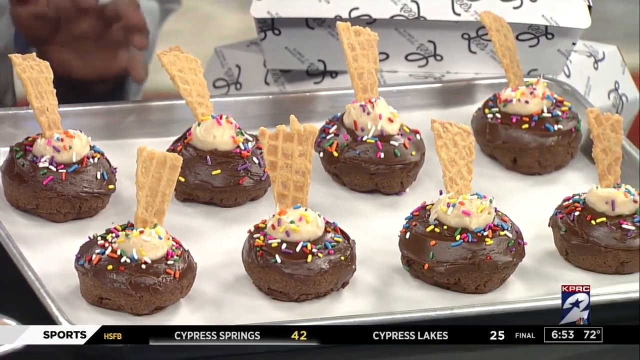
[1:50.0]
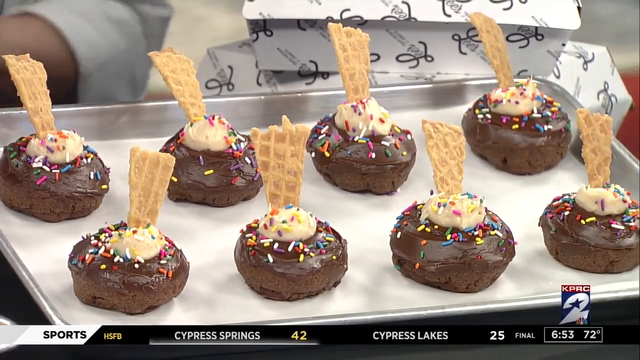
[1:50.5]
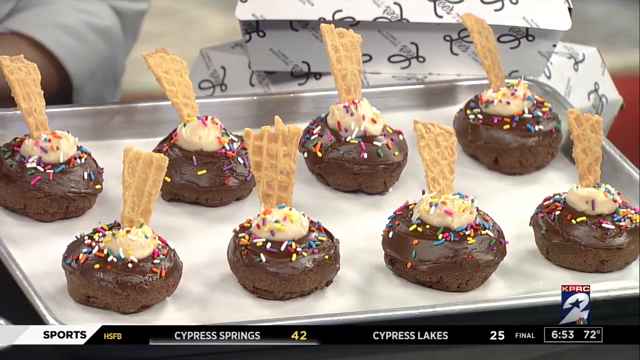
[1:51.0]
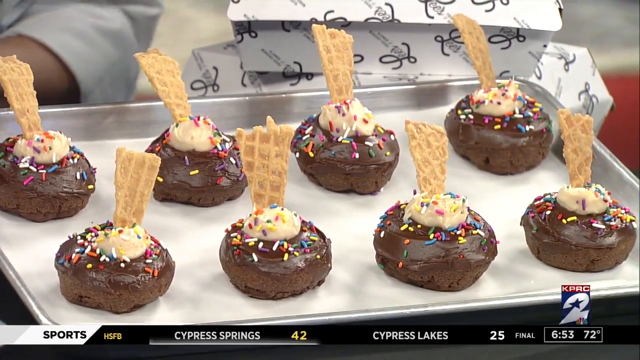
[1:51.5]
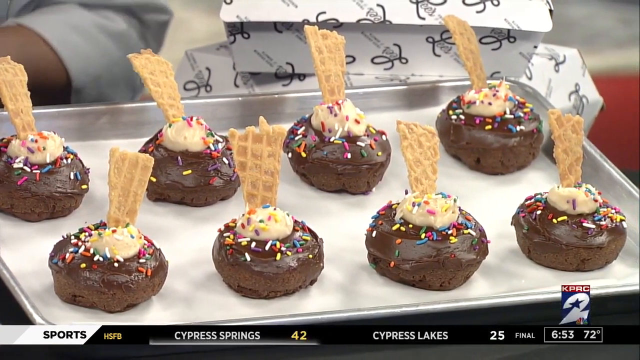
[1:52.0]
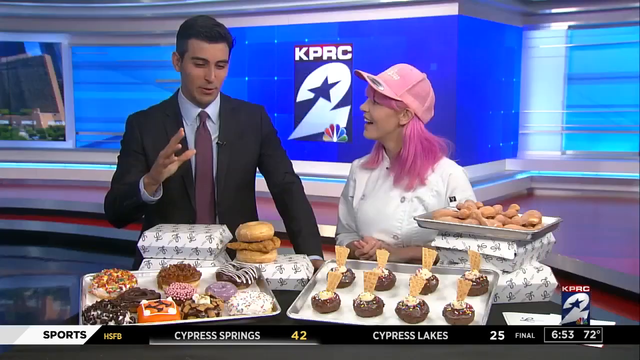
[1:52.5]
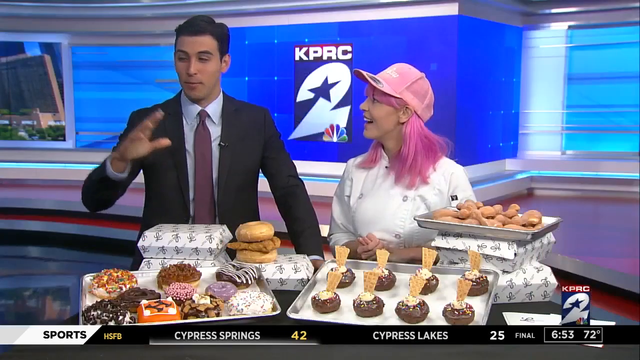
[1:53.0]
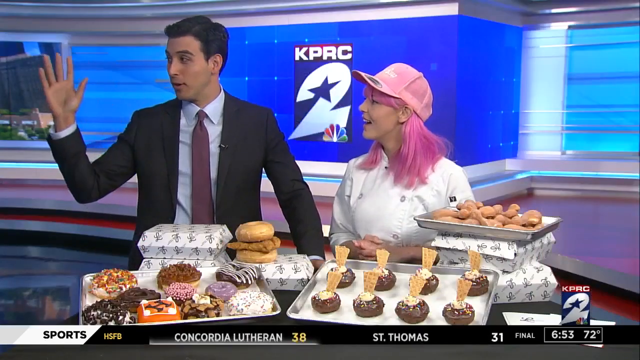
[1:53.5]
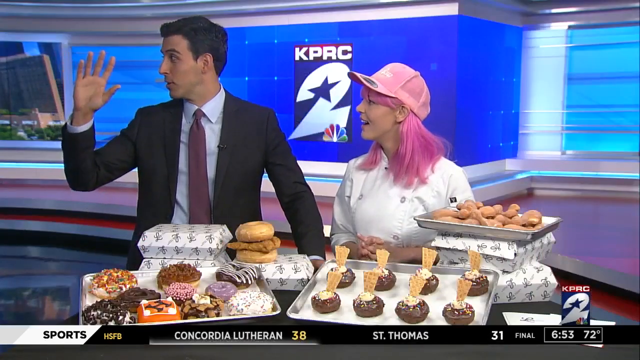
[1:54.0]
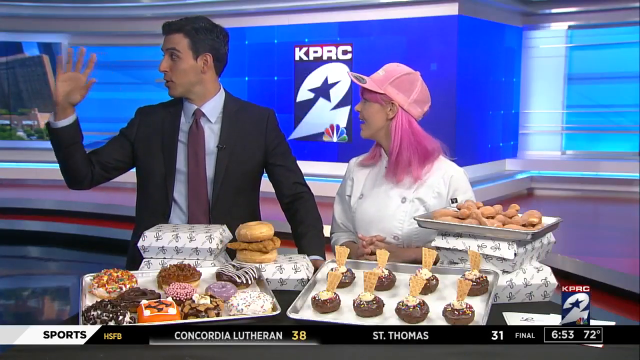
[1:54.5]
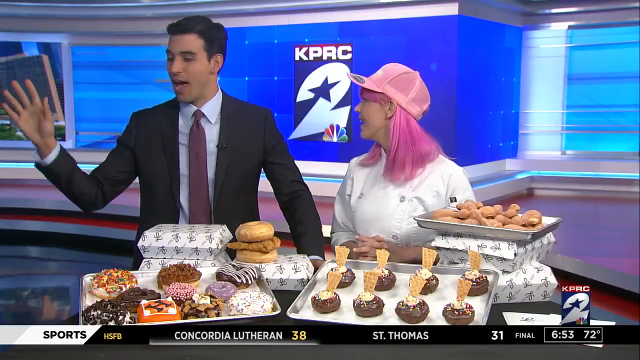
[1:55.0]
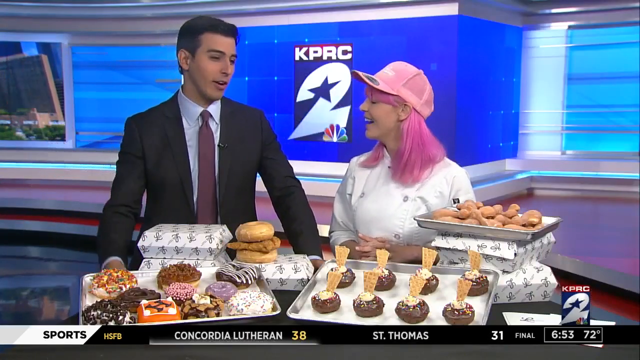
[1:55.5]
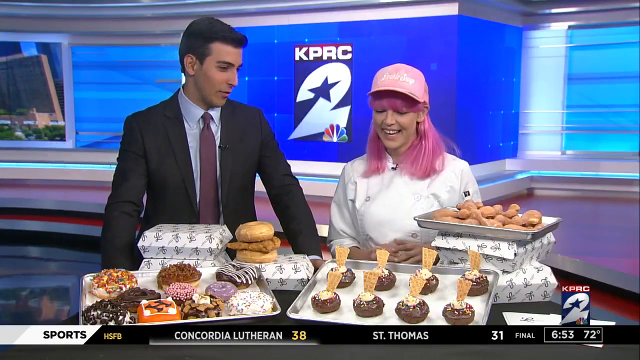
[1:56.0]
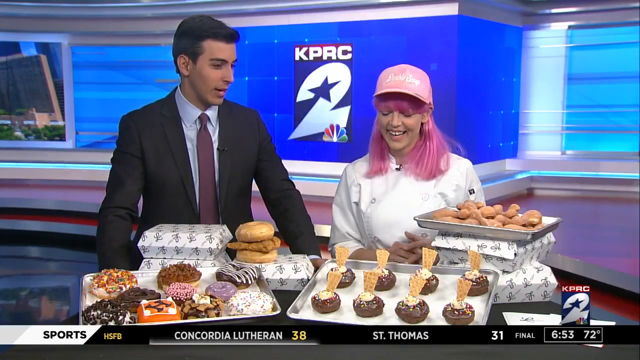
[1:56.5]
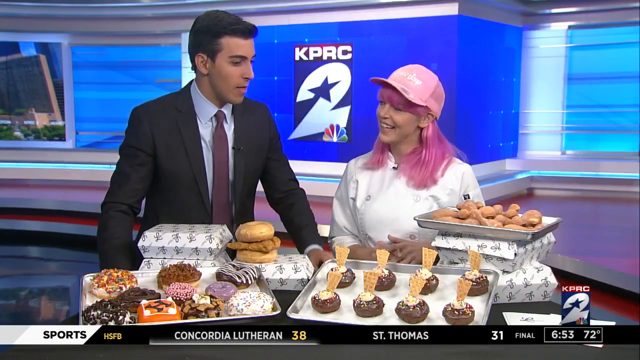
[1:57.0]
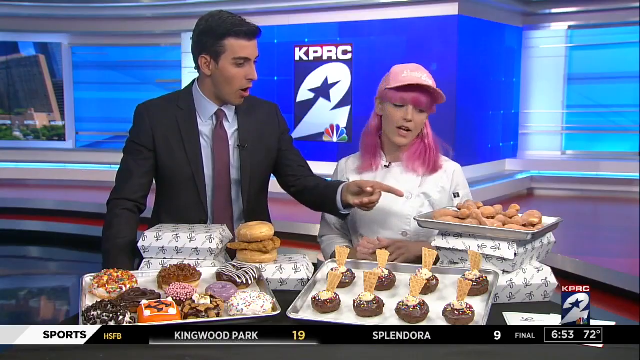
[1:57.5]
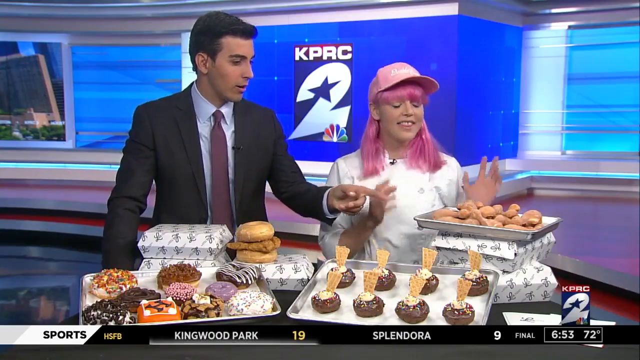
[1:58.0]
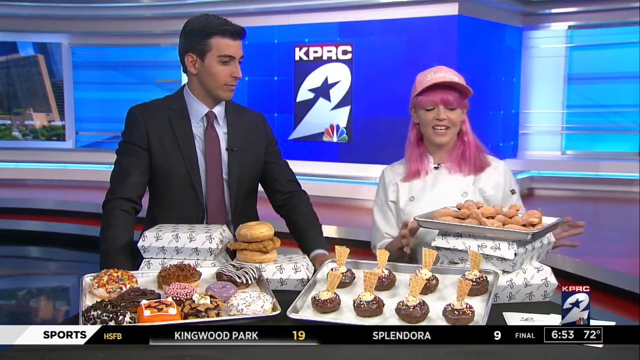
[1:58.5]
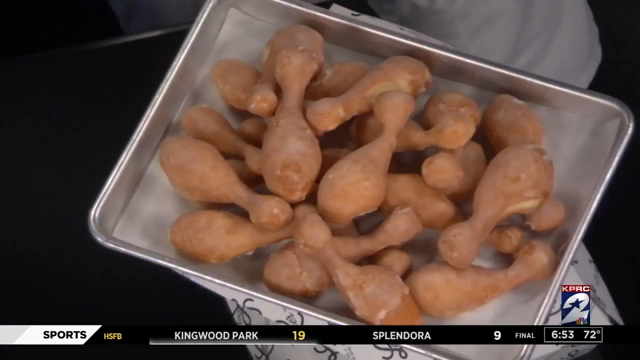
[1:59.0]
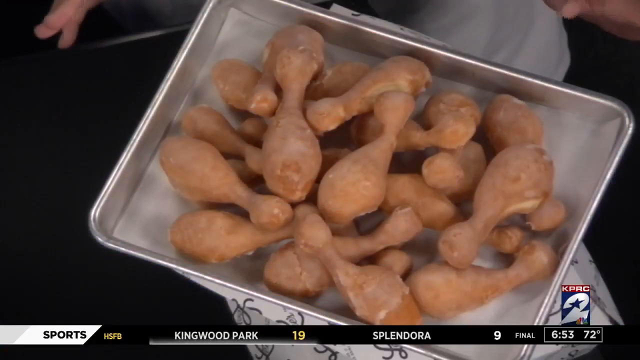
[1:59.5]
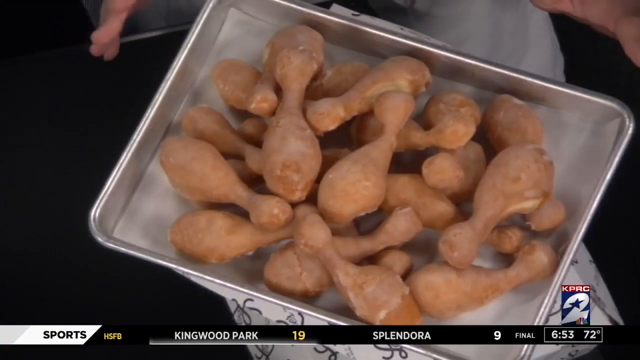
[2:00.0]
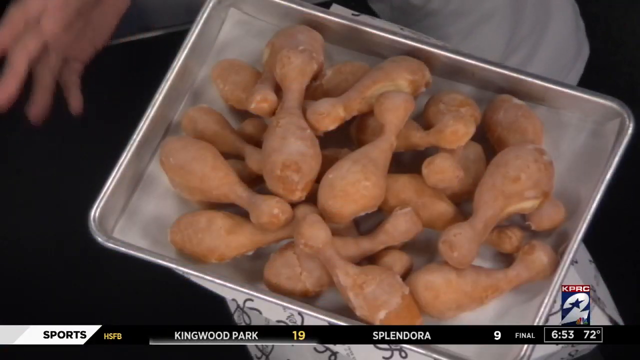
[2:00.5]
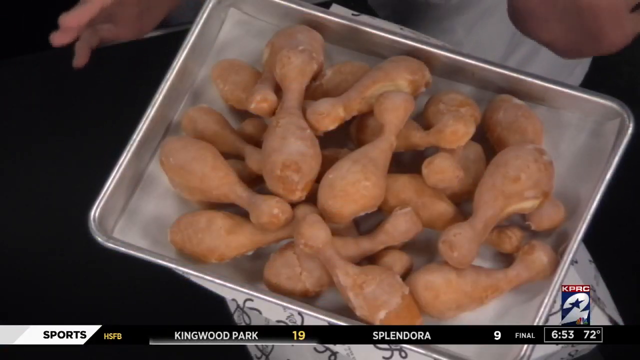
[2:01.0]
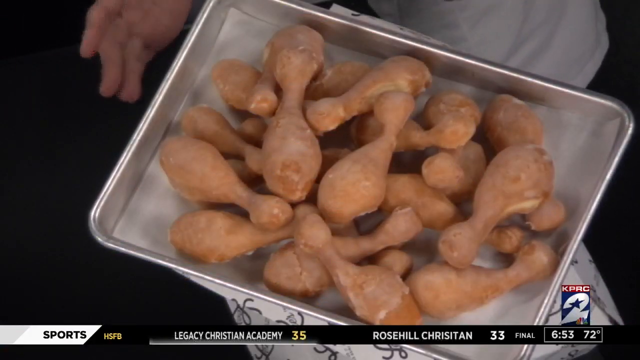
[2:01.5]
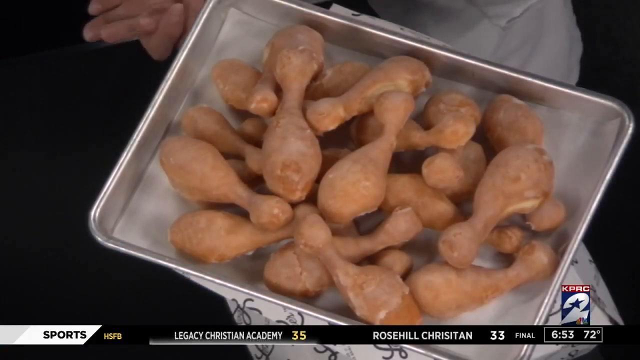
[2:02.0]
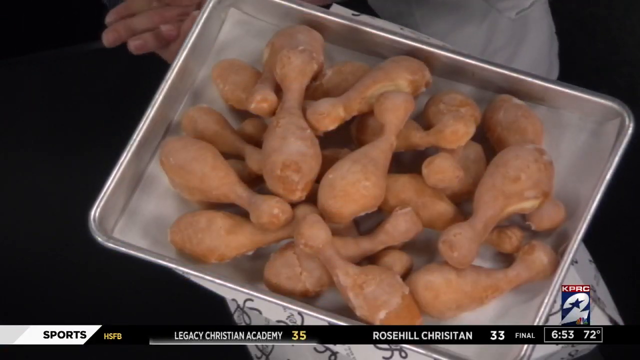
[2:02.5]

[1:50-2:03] Cupcakes made by a woman are shown on the KPRC show. Next, a tray of many donuts made in the shape of chicken drumsticks is shown. The presenter is standing next to her as they talk and she describes her baking and the designs on the donuts. Some of the items are round chocolate ones and small cupcakes, along with the set shaped like chicken drumsticks.